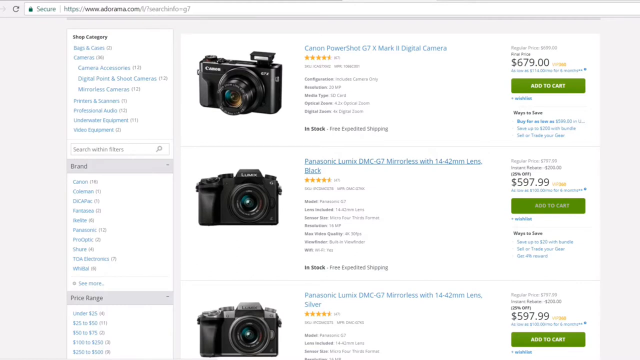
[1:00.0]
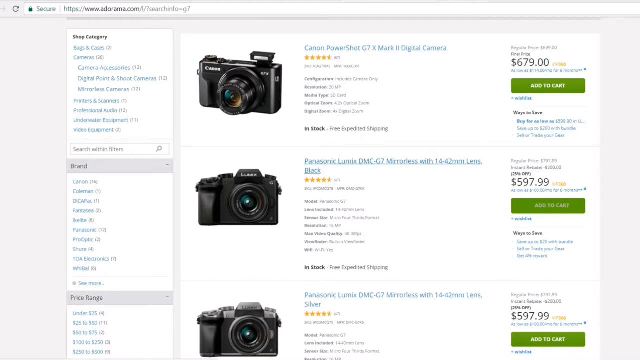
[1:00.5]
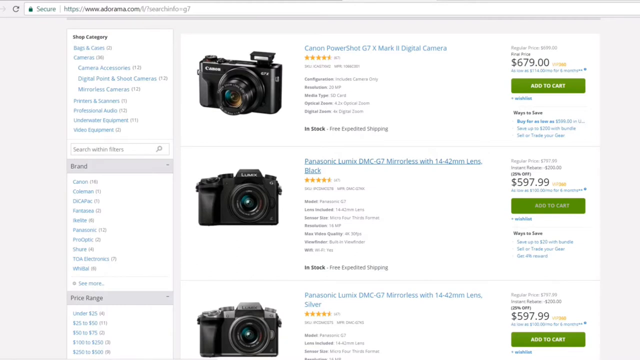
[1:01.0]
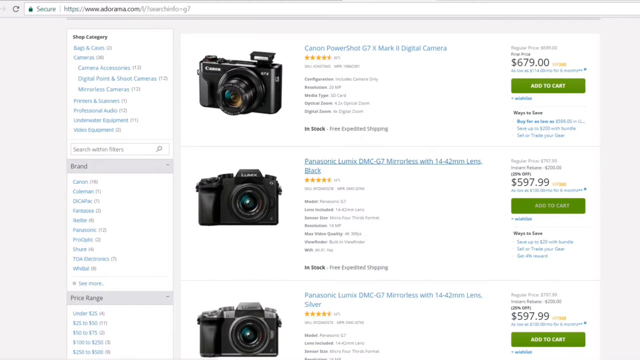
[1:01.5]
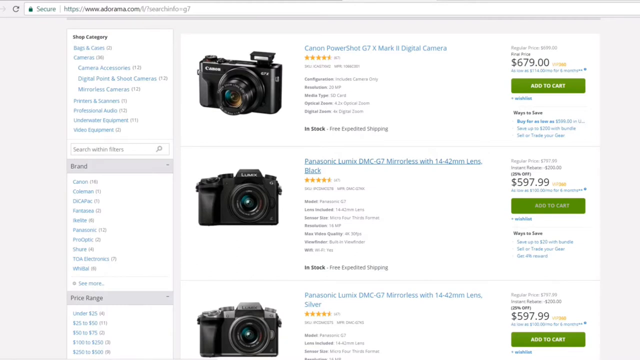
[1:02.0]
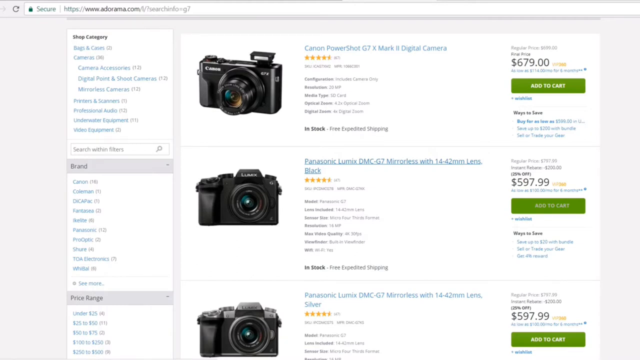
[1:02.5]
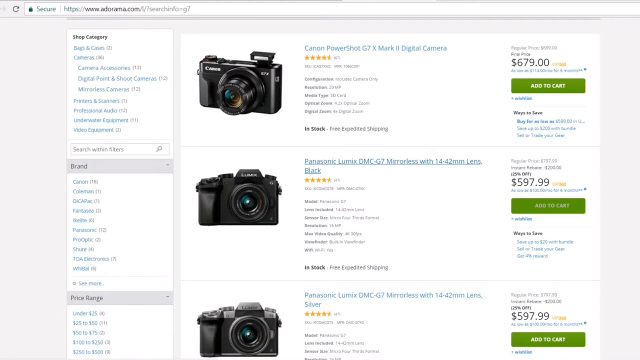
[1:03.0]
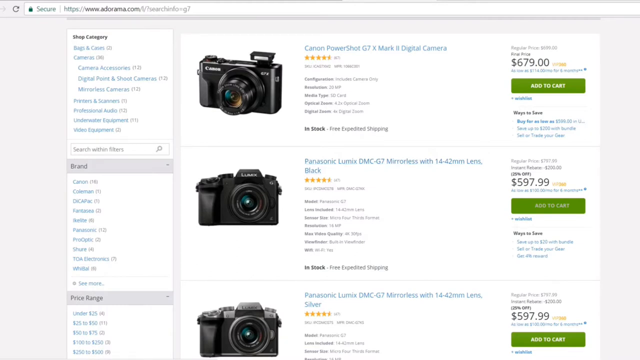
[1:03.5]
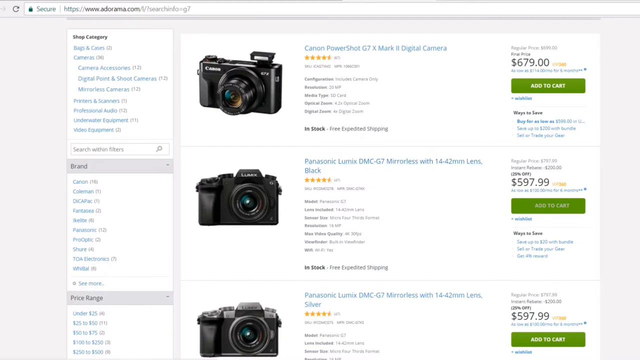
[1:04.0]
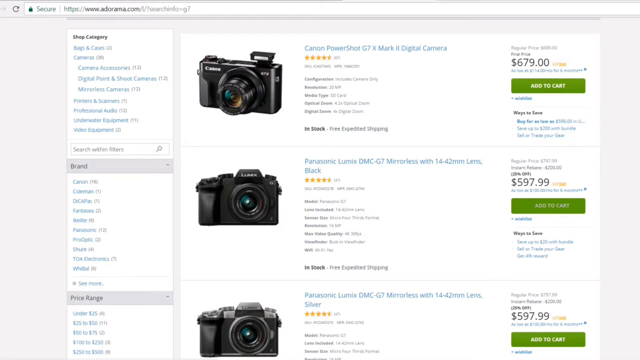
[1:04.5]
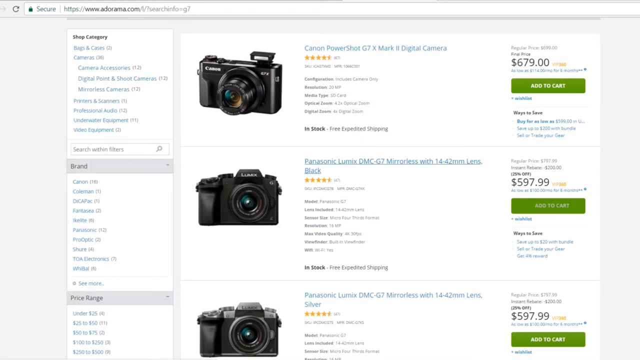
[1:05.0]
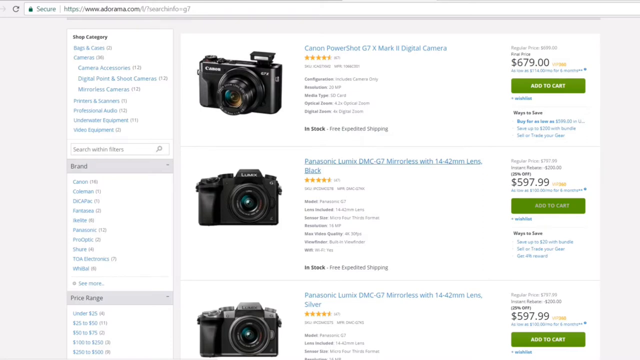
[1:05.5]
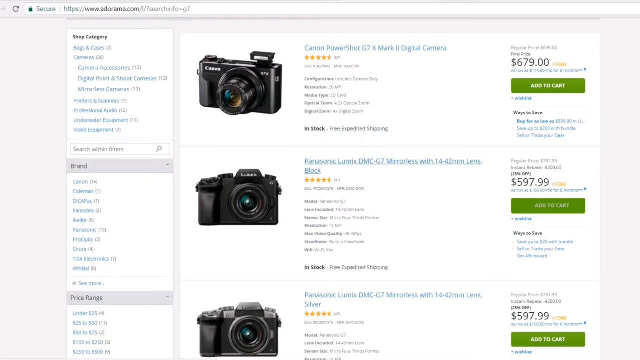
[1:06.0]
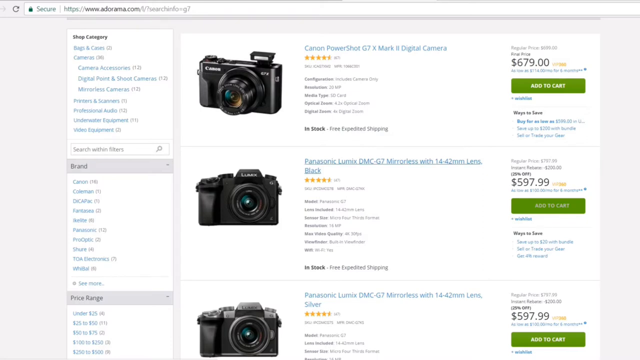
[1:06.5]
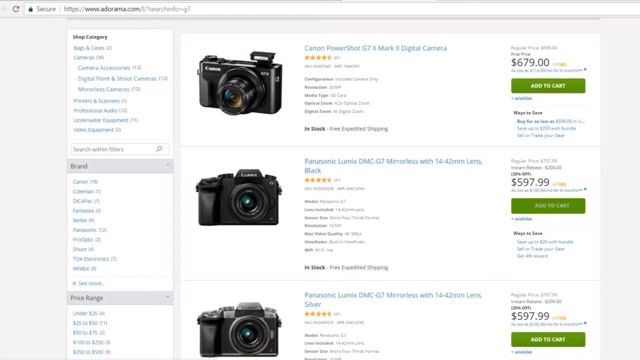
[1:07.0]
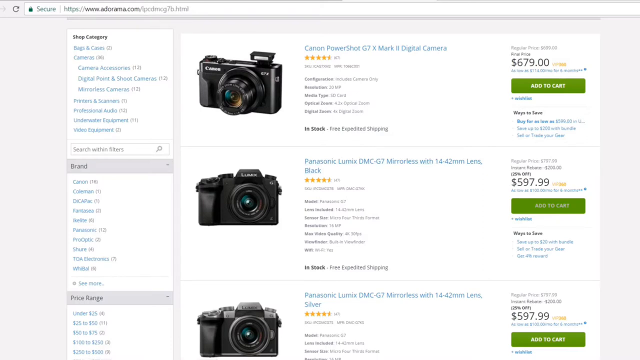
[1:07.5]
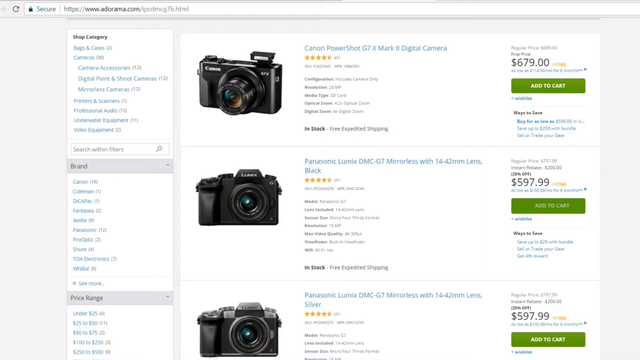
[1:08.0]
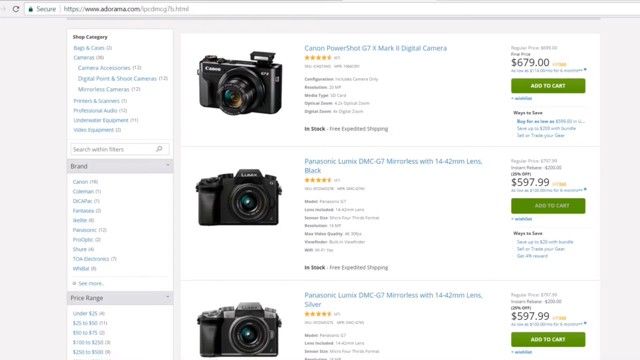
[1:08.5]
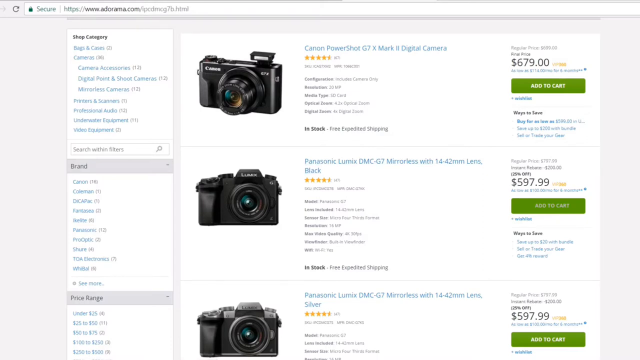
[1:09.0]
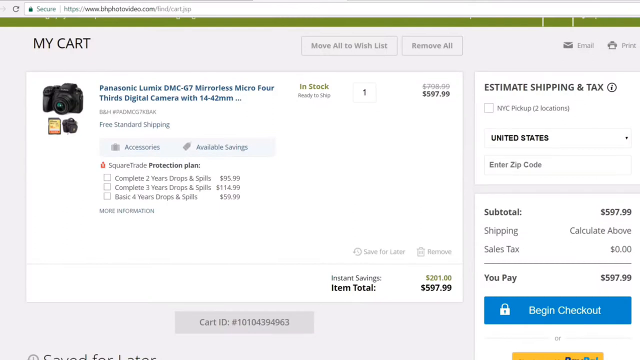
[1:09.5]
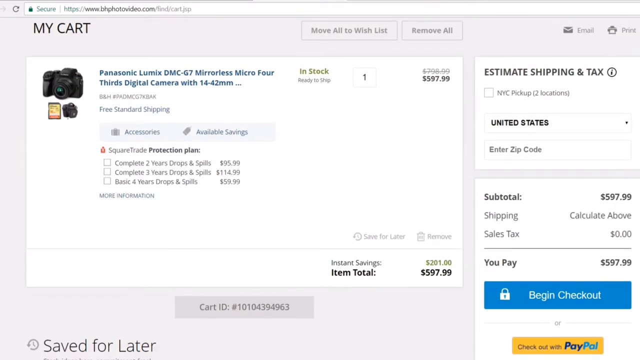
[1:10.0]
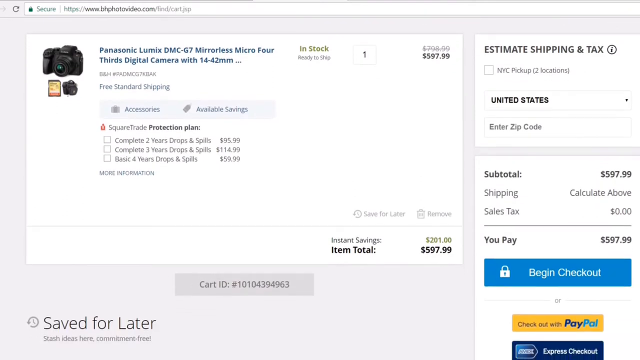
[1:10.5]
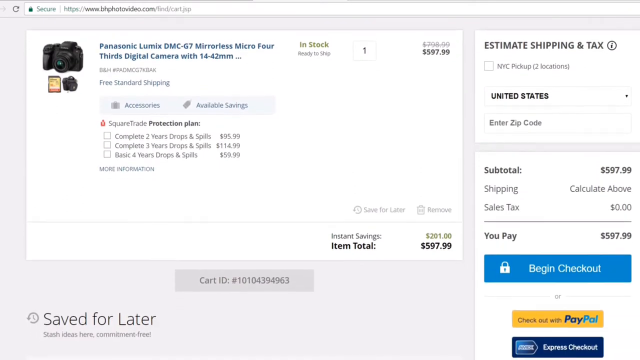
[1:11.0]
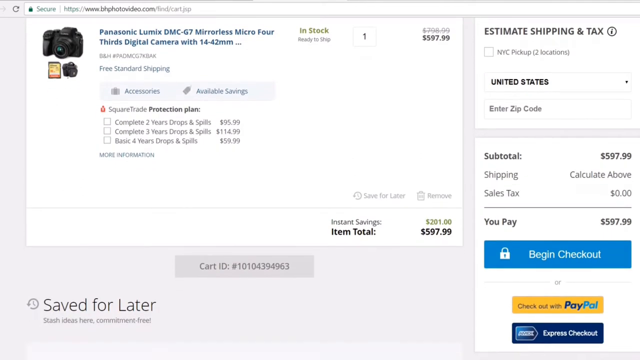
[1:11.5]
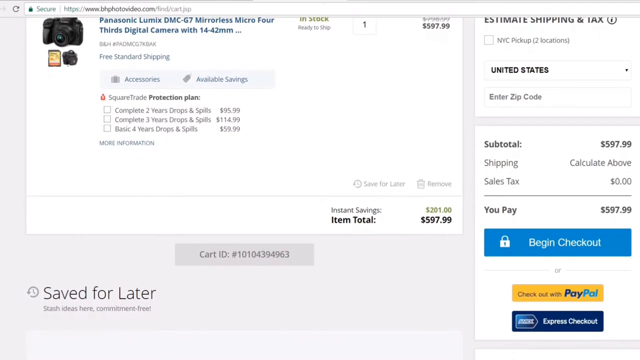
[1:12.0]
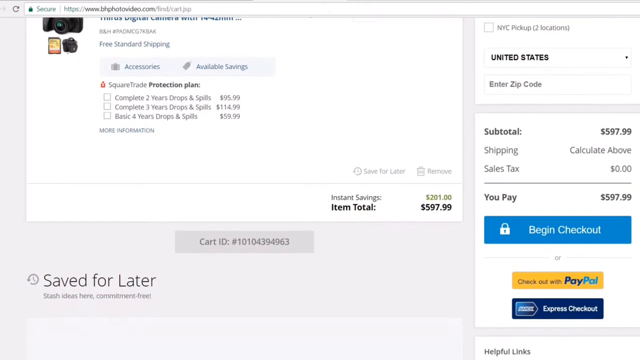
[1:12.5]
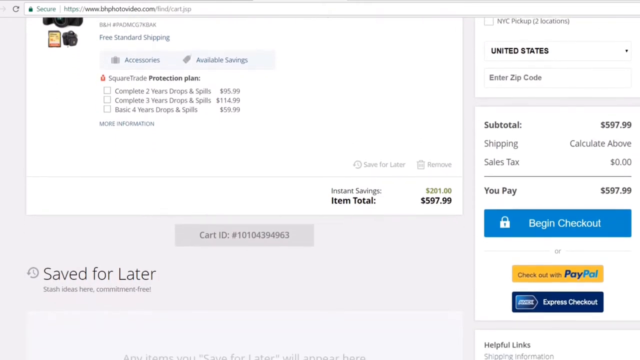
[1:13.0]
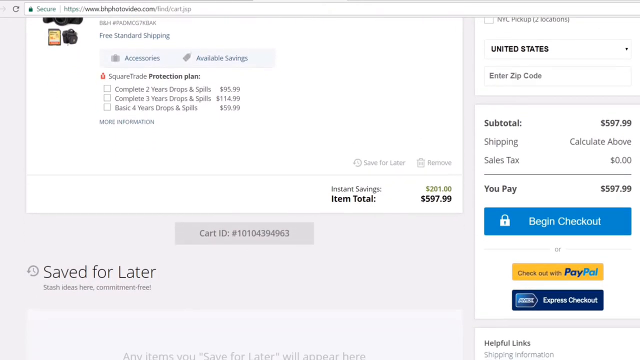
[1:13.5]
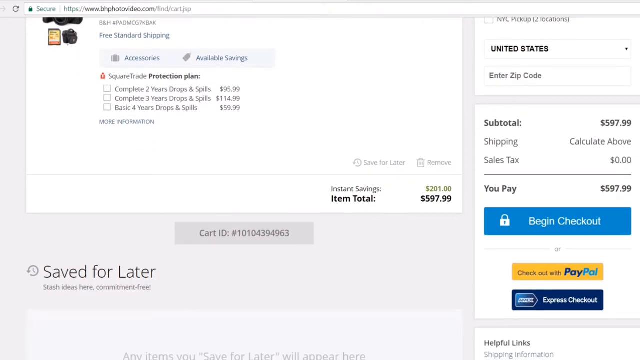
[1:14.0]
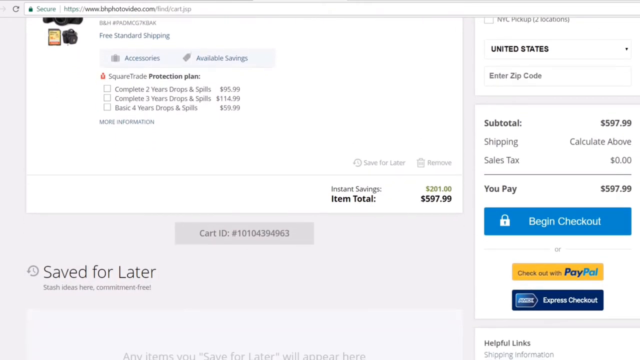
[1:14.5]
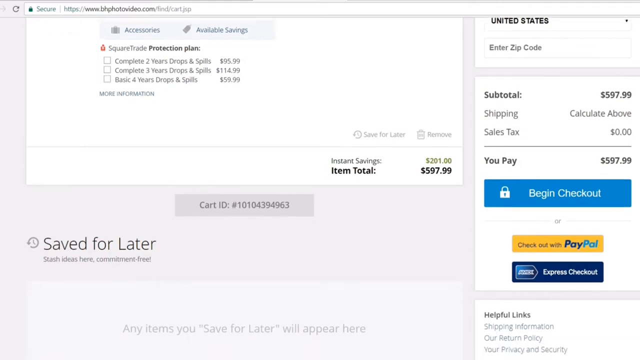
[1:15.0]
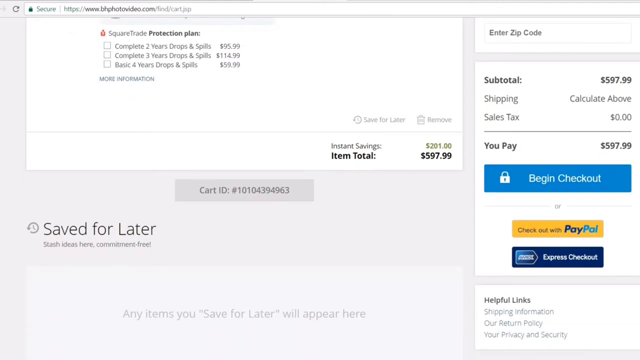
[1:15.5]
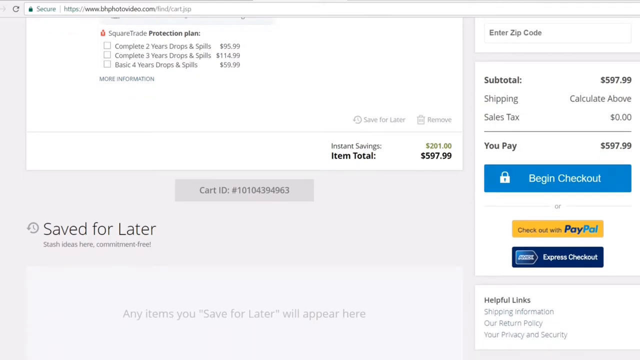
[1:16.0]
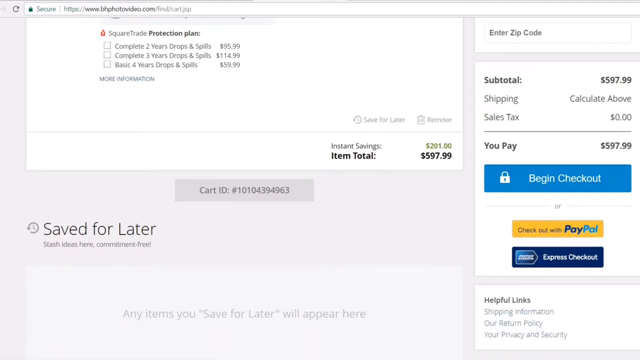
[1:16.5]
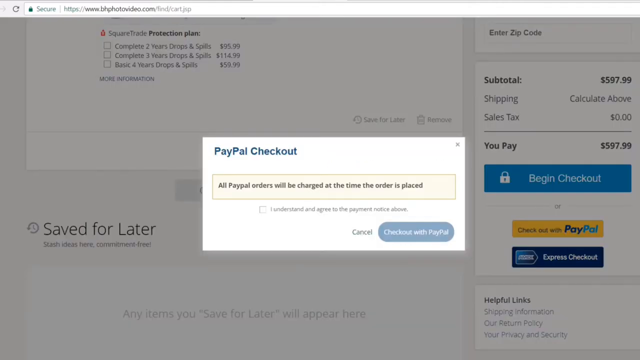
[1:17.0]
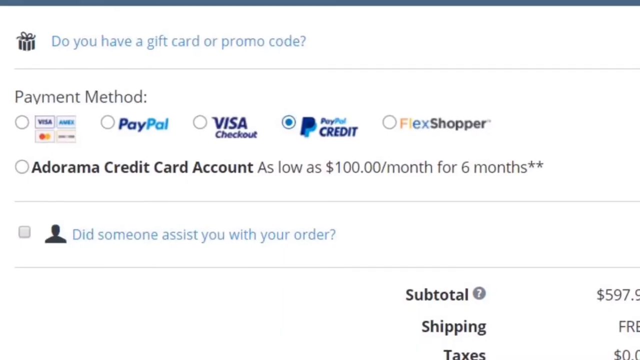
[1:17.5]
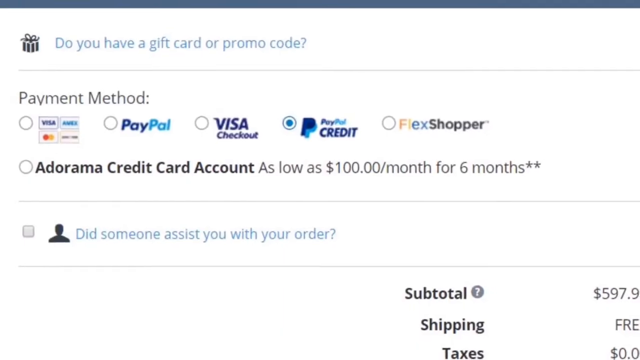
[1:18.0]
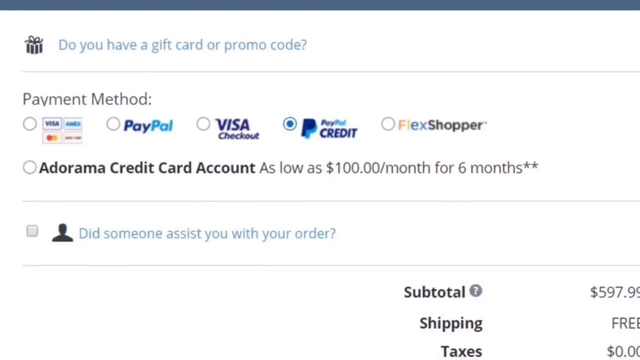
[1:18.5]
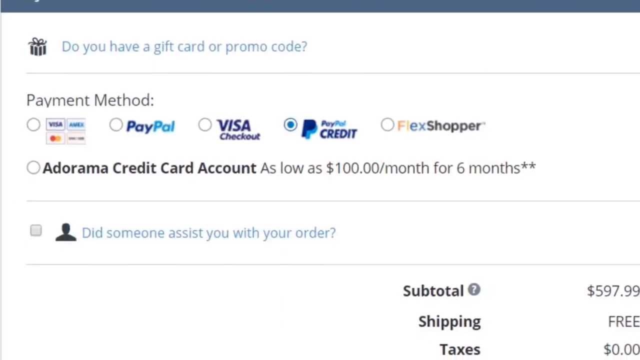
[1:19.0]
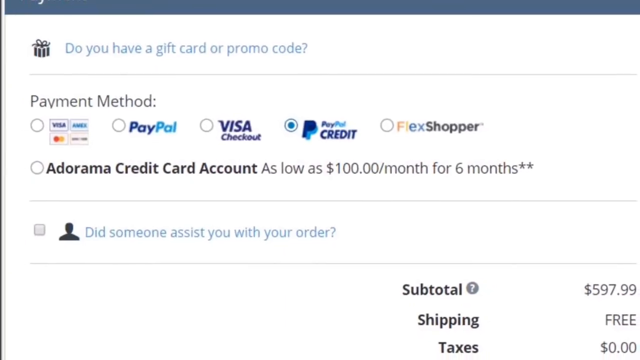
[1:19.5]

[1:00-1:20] The screen recording continues showing different cameras sold by the online retailer, then transitions to the online cart. The Panasonic Lumix camera is in the cart with approximate product pricing and features like instant savings. The recording scrolls down to options for checking out, showing payment options: debit or credit card, or PayPal, plus a couple of options for flex shopping or buy now pay later plans.